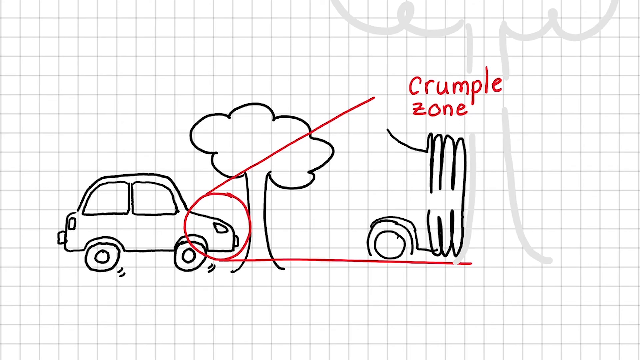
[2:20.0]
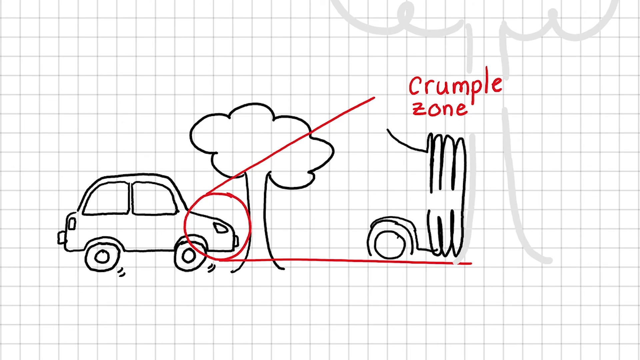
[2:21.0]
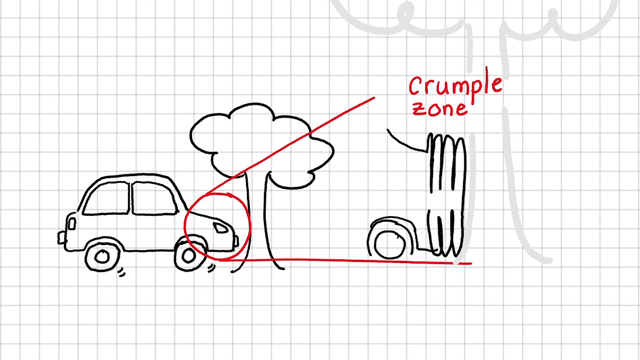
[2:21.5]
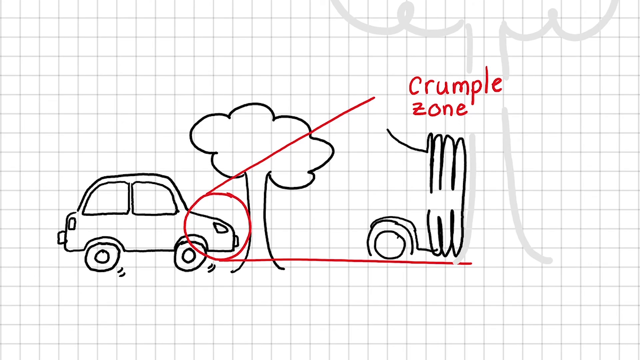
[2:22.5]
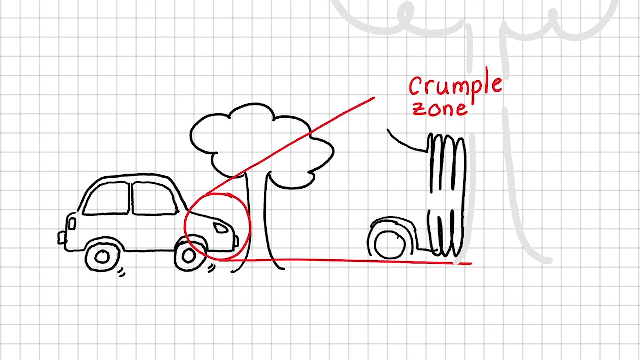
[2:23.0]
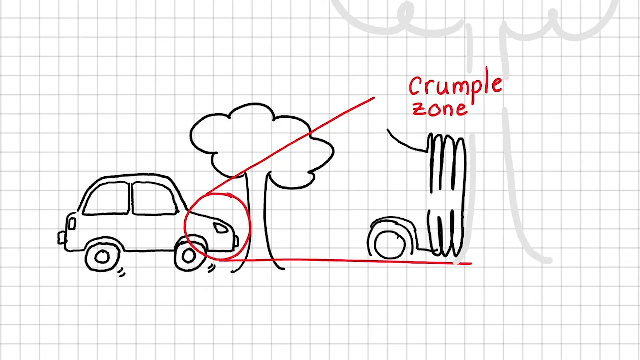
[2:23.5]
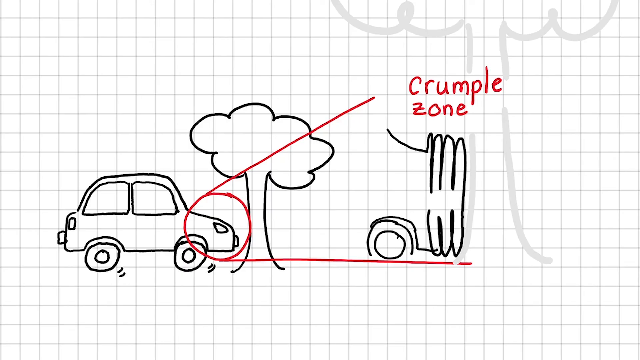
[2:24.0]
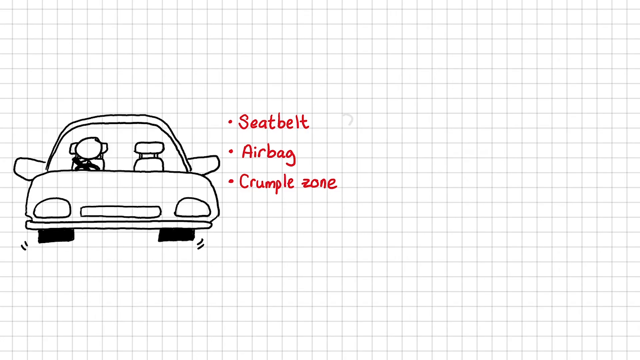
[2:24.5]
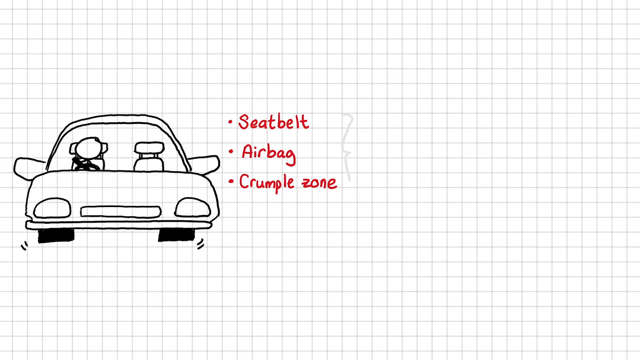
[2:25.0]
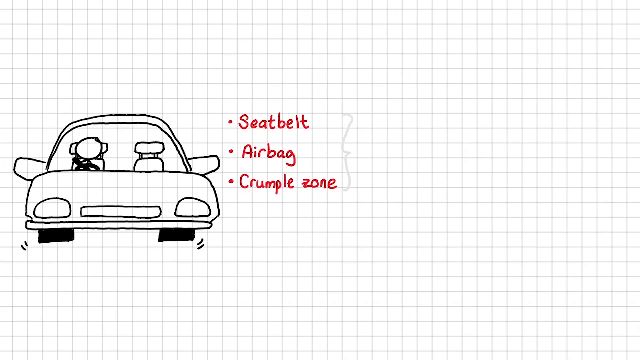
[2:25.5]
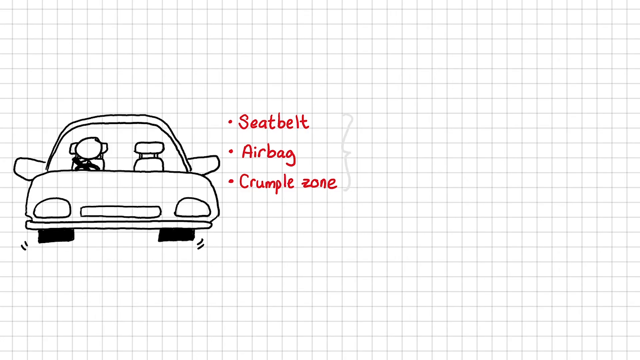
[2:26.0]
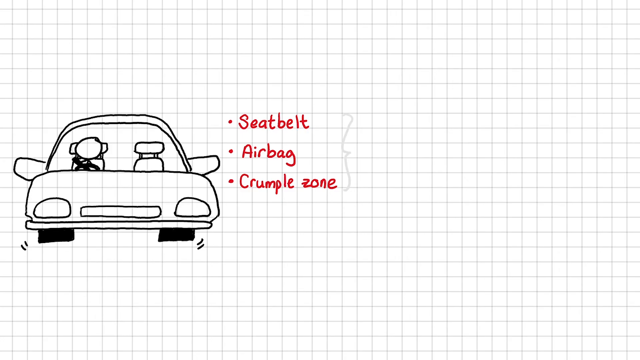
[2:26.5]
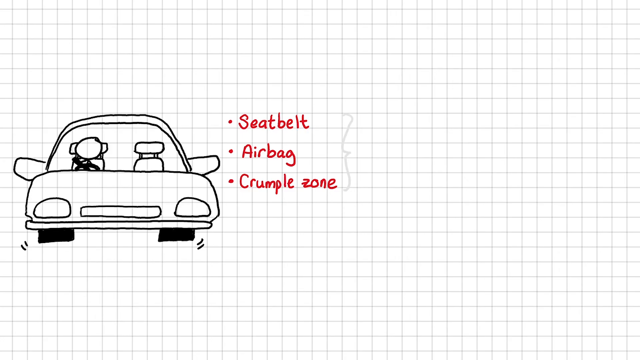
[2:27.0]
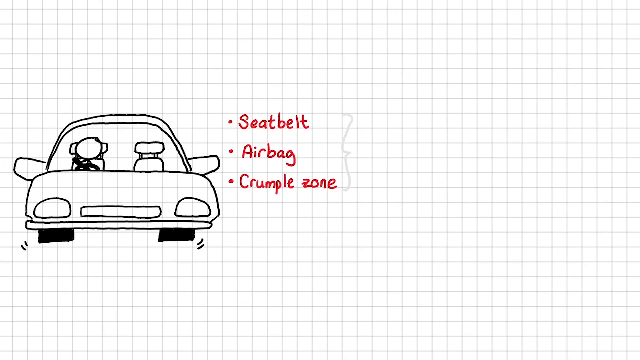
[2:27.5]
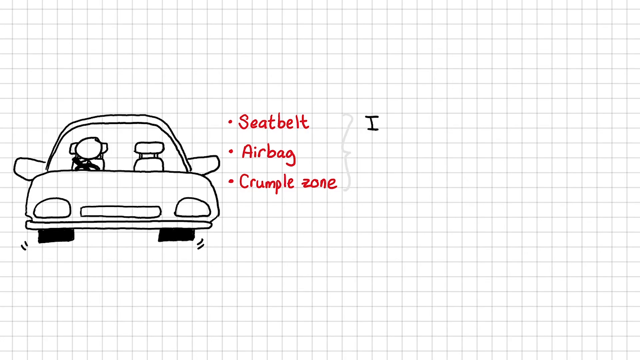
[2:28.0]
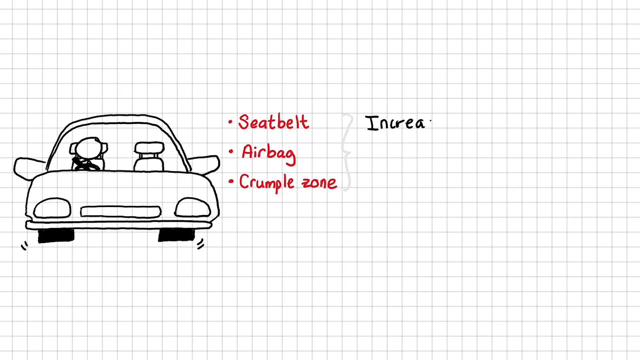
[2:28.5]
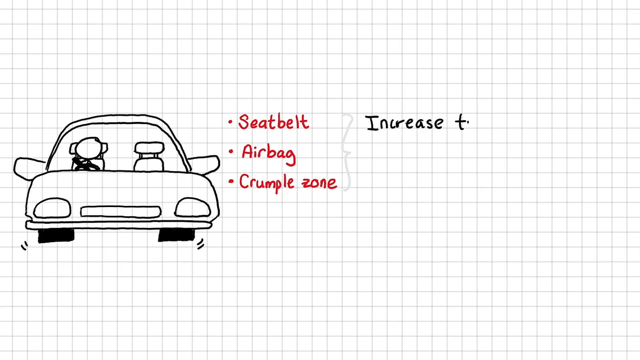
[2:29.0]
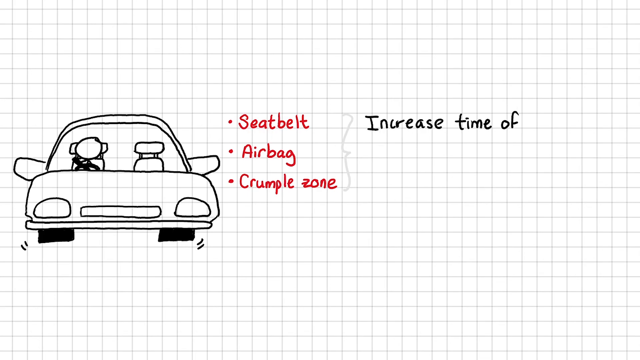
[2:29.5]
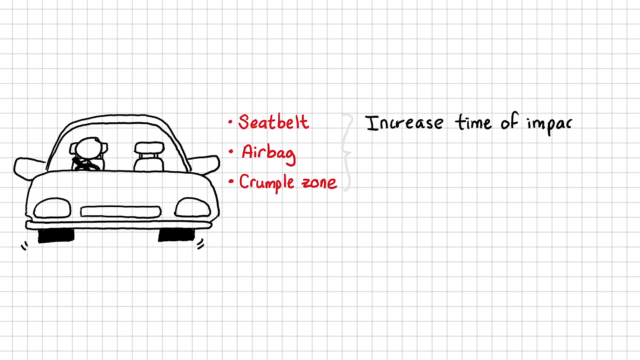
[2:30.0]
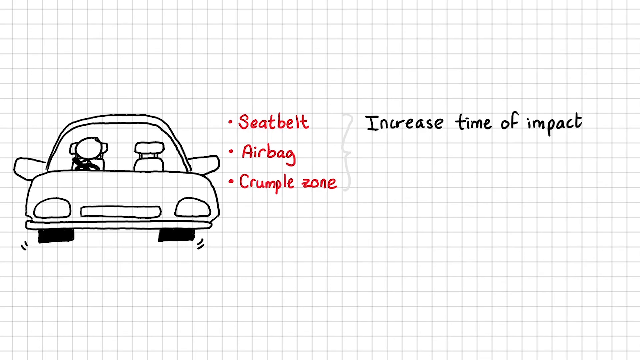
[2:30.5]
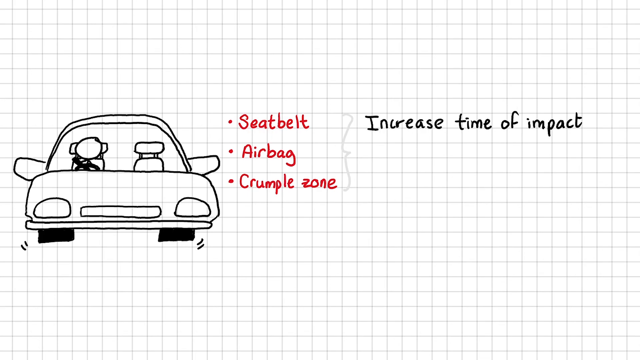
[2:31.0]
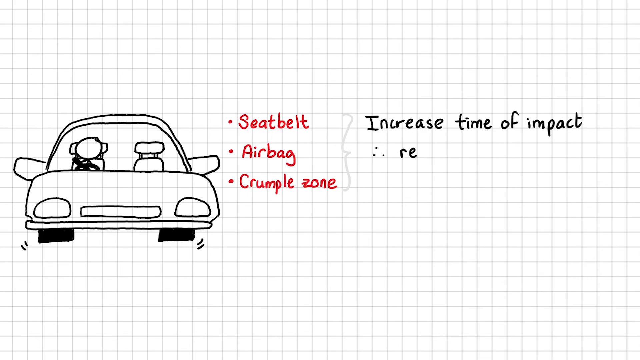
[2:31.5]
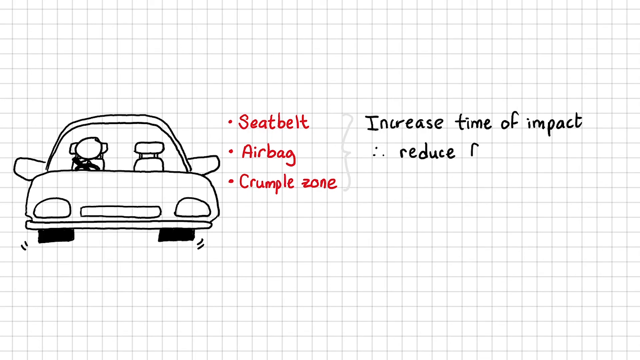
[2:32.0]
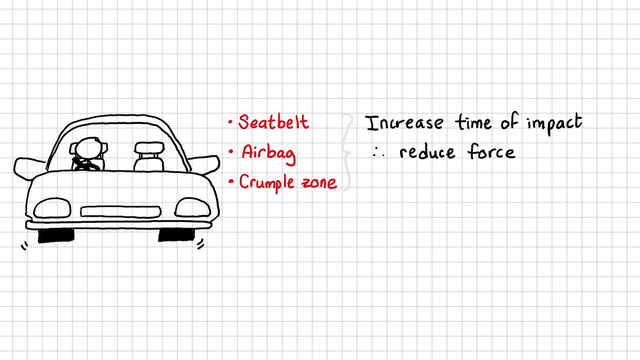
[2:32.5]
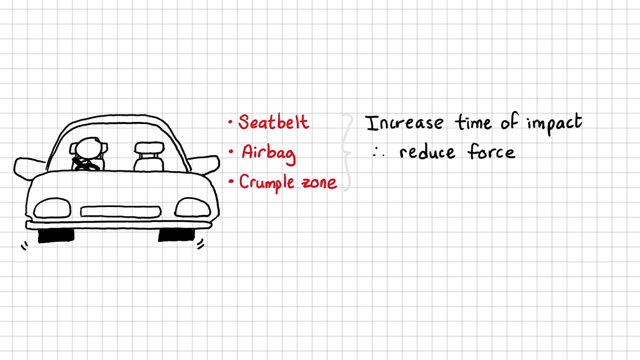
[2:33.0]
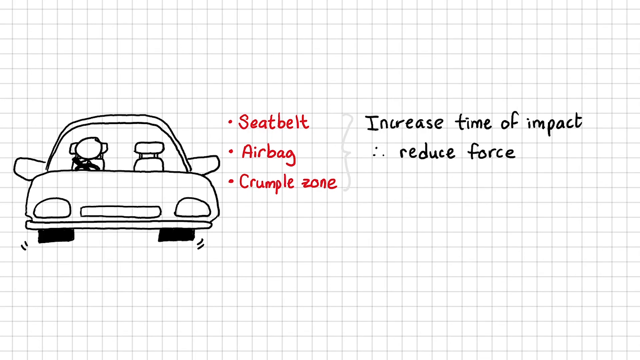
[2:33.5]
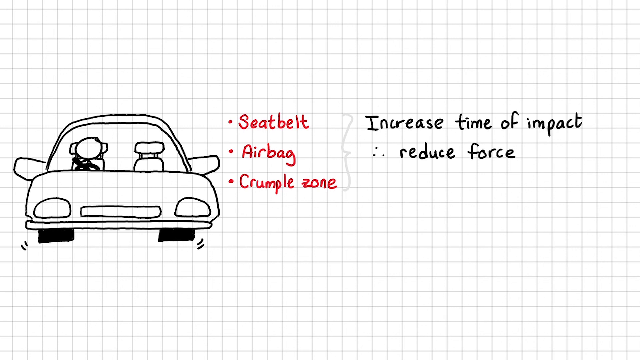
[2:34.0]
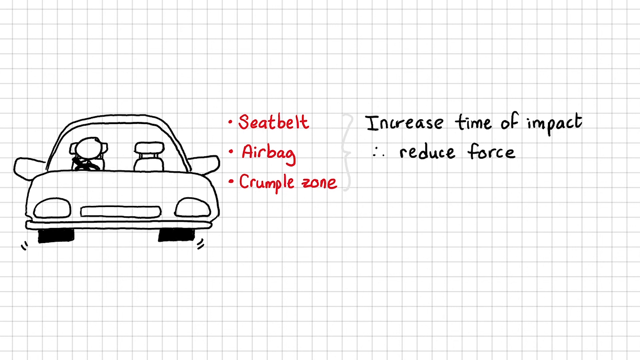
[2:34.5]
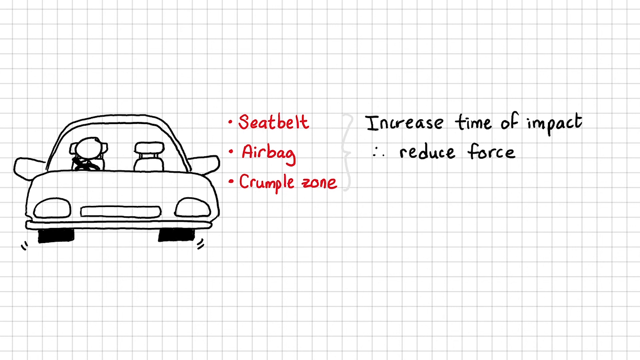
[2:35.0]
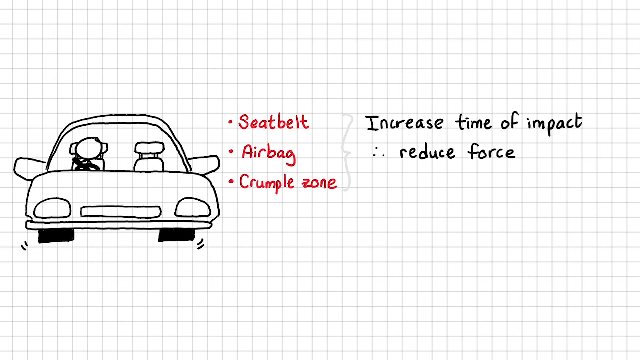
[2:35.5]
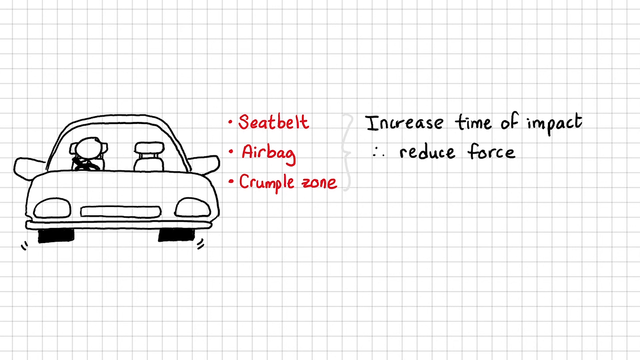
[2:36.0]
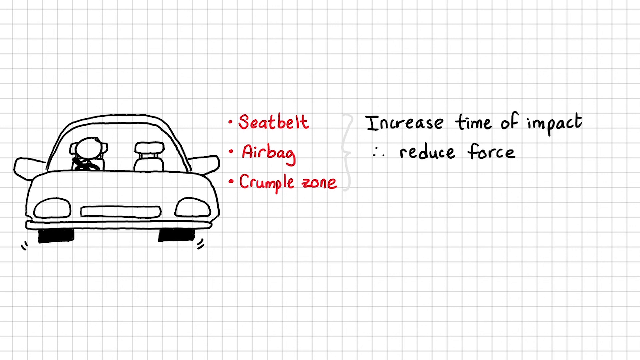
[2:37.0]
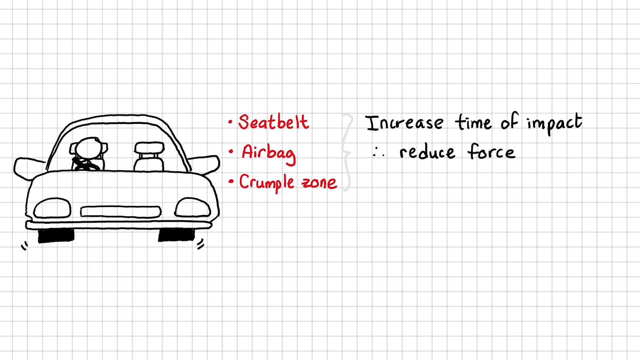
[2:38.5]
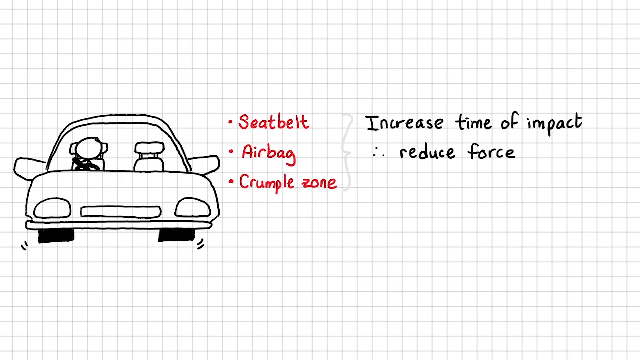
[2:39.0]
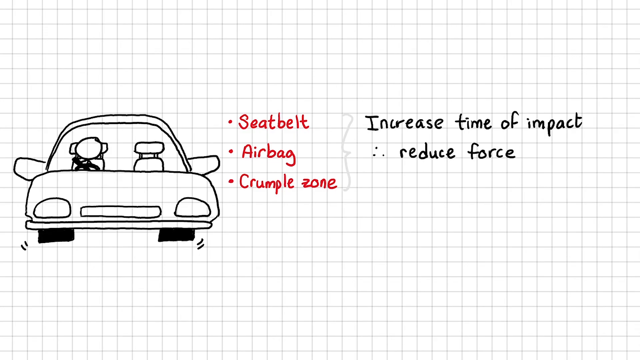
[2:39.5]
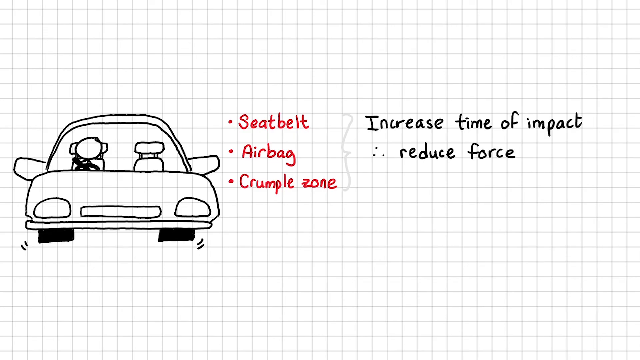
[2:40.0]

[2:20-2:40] An outline sketch is drawn on a grid-like pattern background. It contains a side view of a two-wheeled car with a canopied tree outline drawn in front of it, and a red circle around the front portion of the car with two lines drawn from above and below the circle and "crumpled zone" written on top. The front portion of the car alone is then drawn with wavy lines depicting impact absorption, and a gray tree is drawn in front of it. The slide changes to another sketch, with the front portion of the car drawn at center left. To its right, three red bullet points read "seatbelt", "airbag", "crumple zone". An open right curly brace covering these three items is drawn in light gray ink. Then, in black ink, "increase time of impact" is written on the first line, followed by "reduced force" on the second.